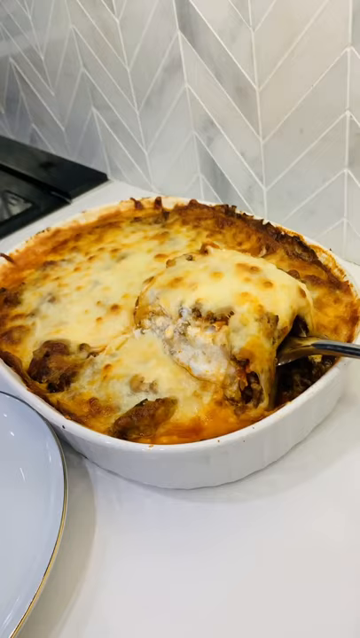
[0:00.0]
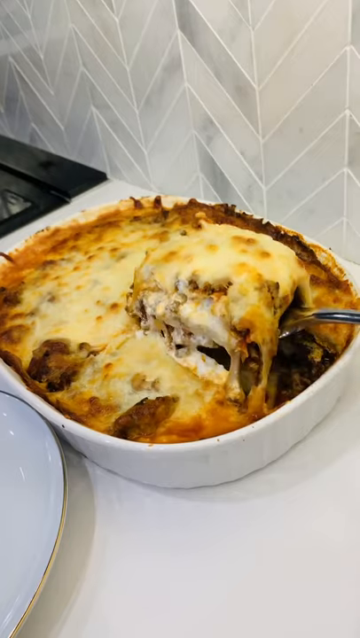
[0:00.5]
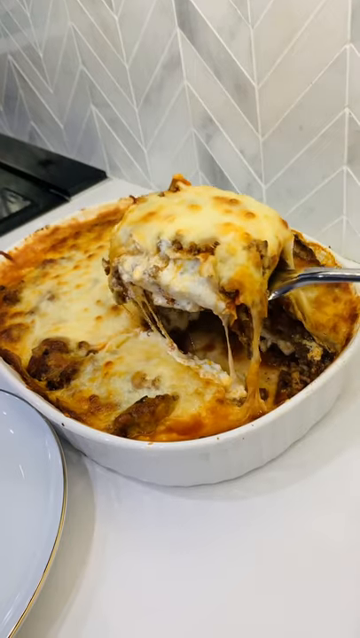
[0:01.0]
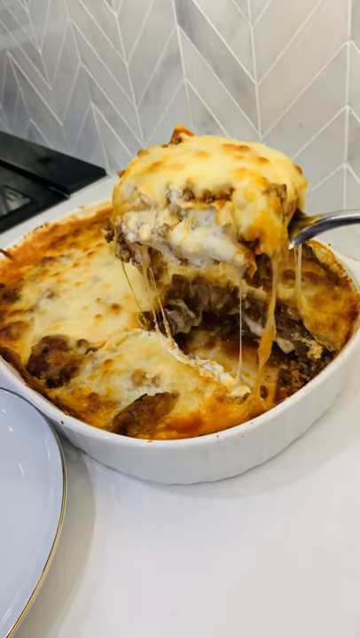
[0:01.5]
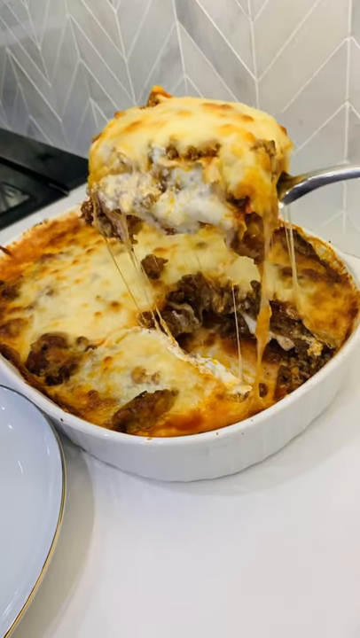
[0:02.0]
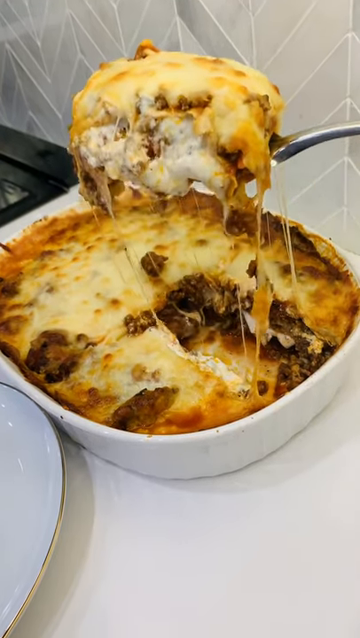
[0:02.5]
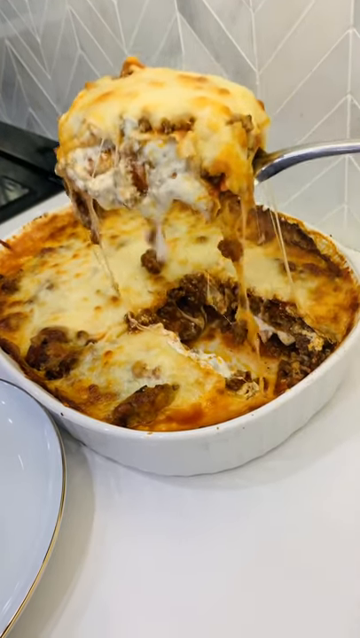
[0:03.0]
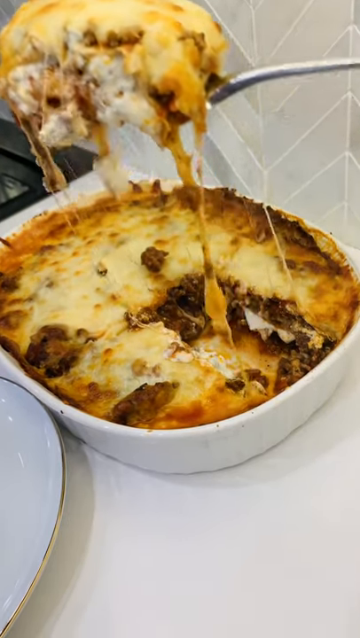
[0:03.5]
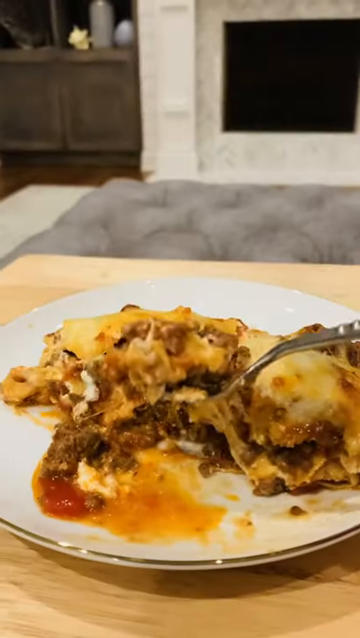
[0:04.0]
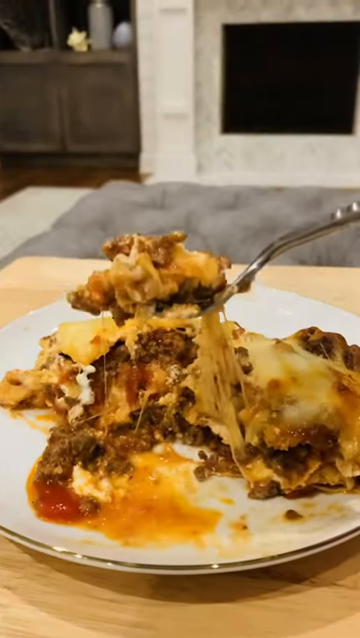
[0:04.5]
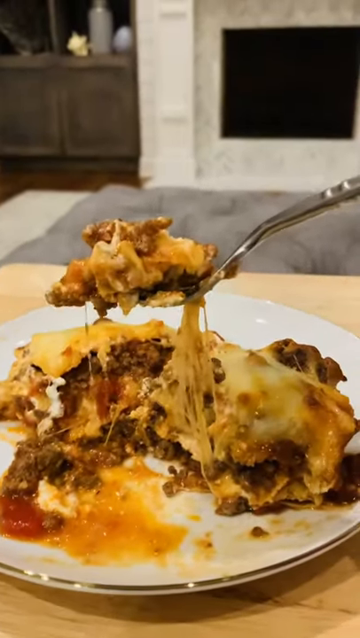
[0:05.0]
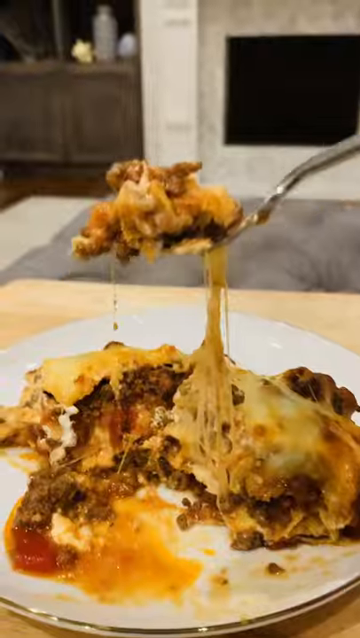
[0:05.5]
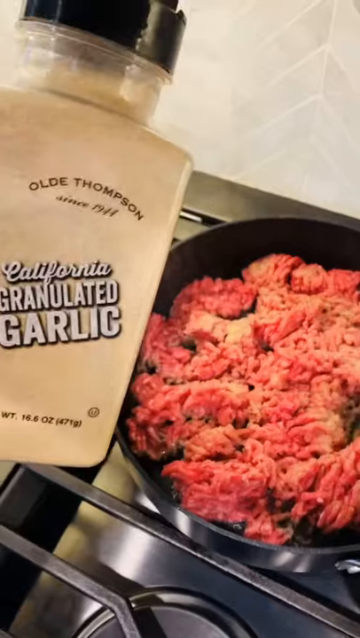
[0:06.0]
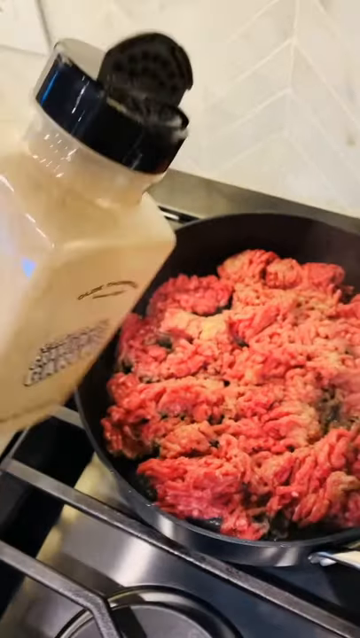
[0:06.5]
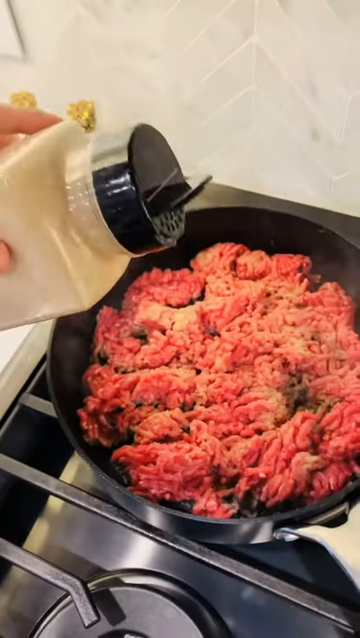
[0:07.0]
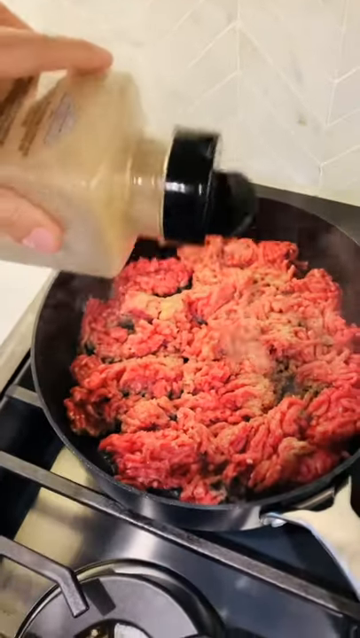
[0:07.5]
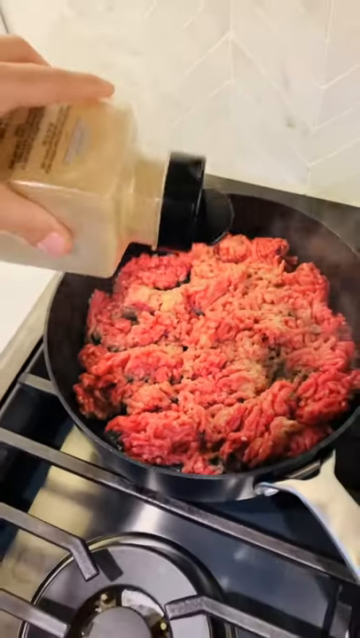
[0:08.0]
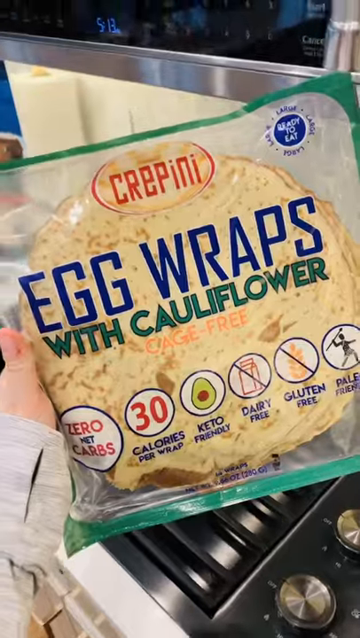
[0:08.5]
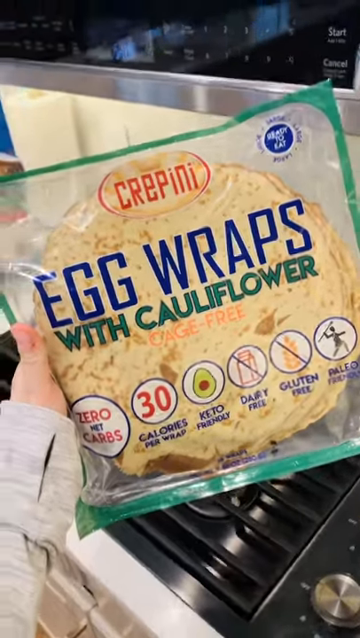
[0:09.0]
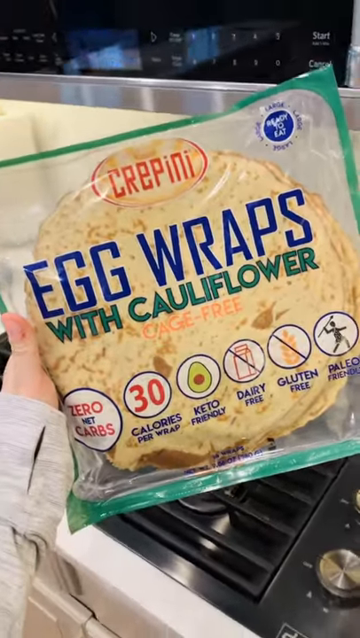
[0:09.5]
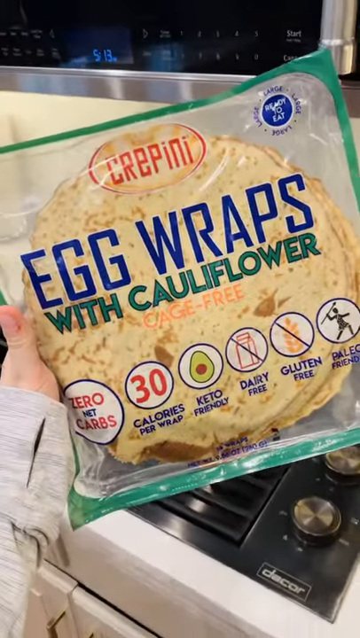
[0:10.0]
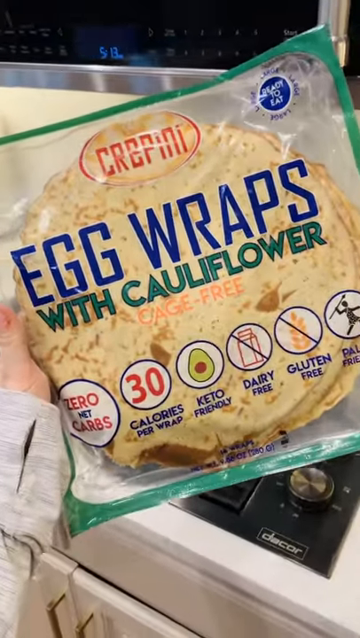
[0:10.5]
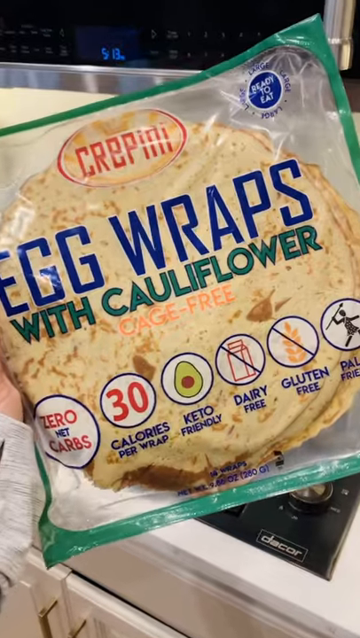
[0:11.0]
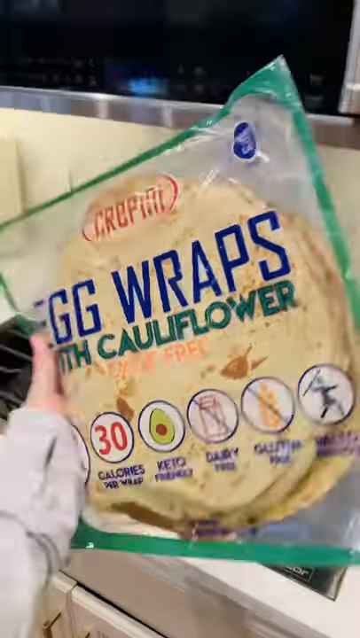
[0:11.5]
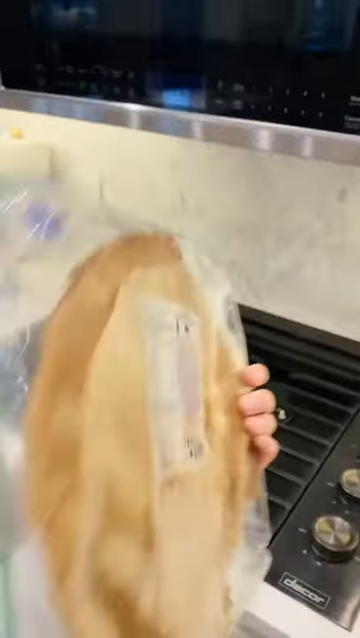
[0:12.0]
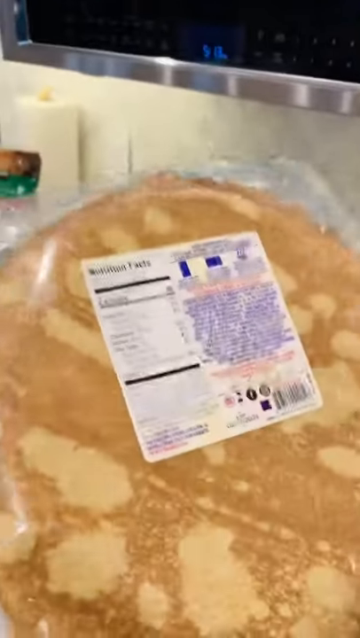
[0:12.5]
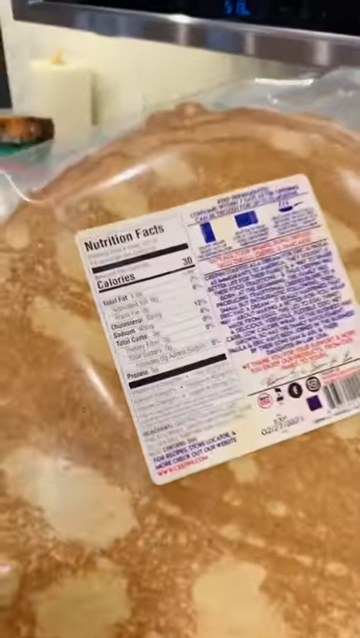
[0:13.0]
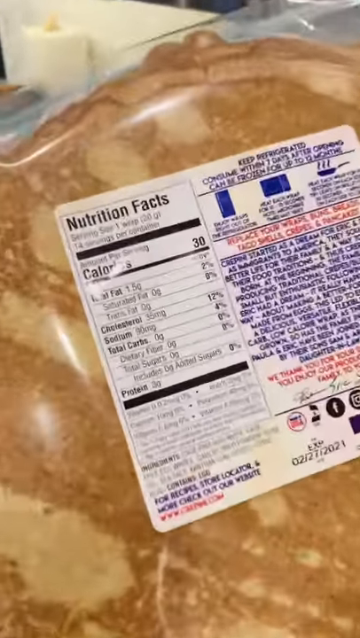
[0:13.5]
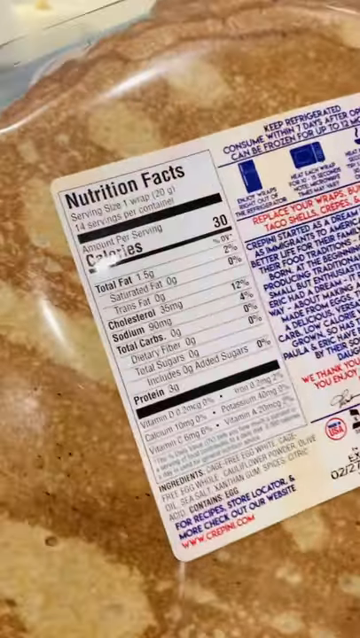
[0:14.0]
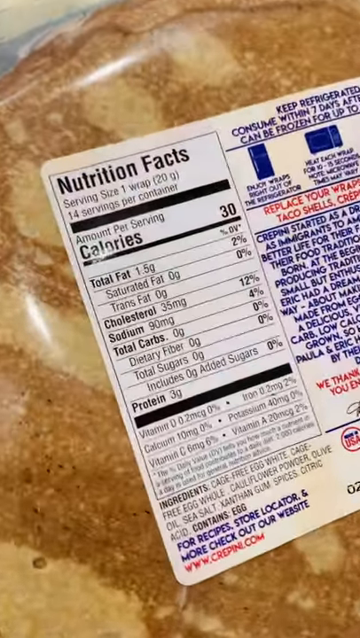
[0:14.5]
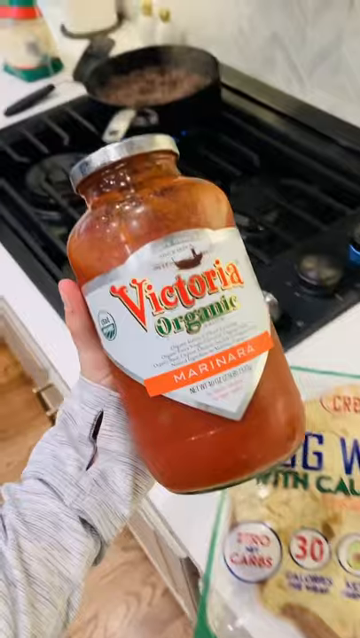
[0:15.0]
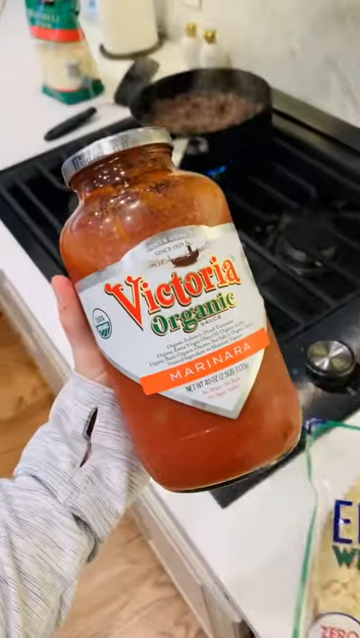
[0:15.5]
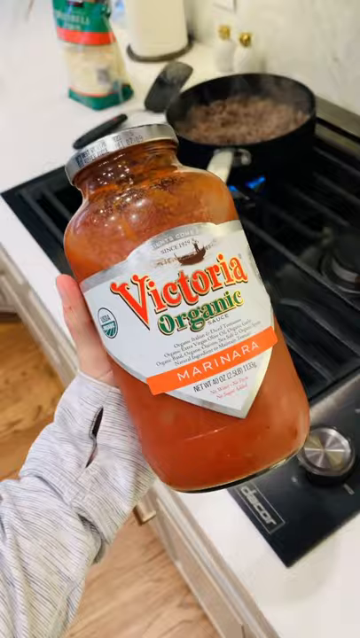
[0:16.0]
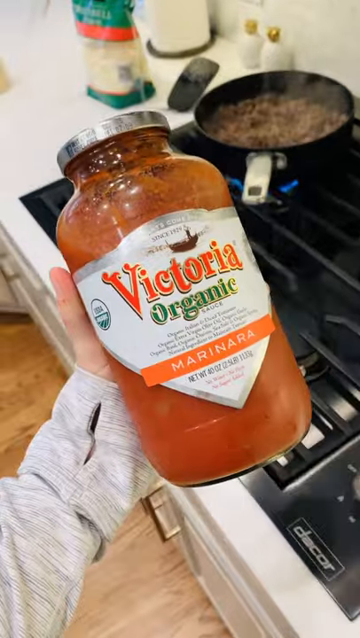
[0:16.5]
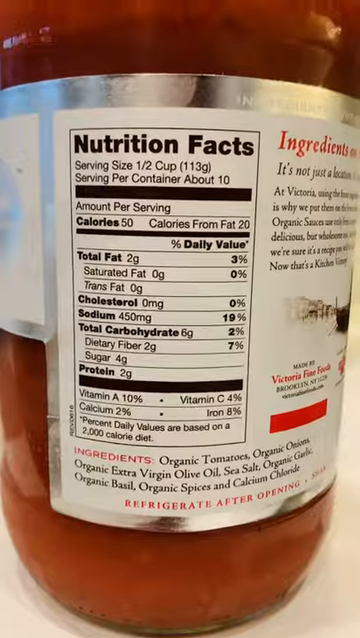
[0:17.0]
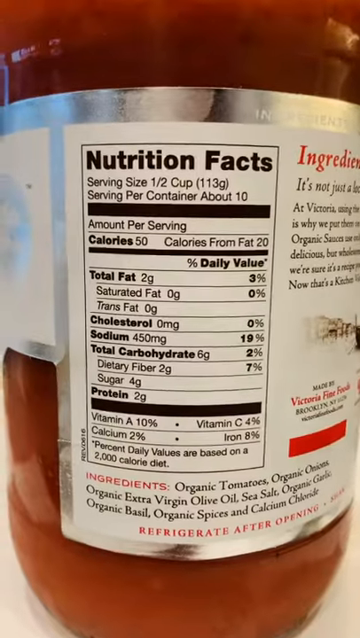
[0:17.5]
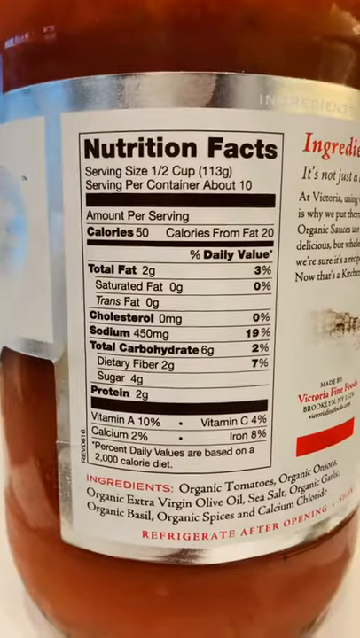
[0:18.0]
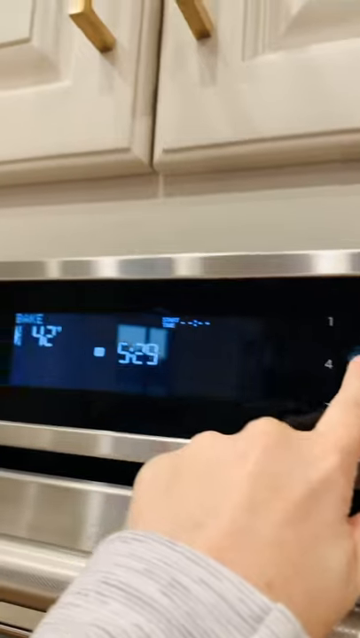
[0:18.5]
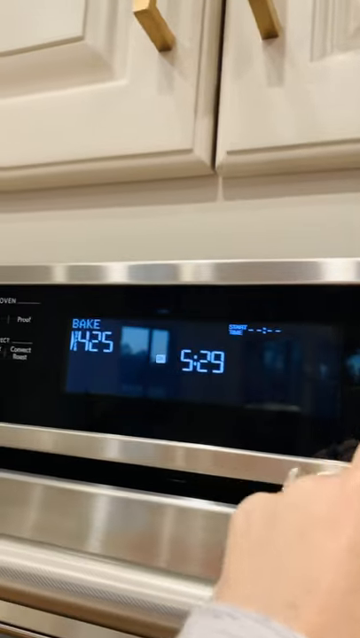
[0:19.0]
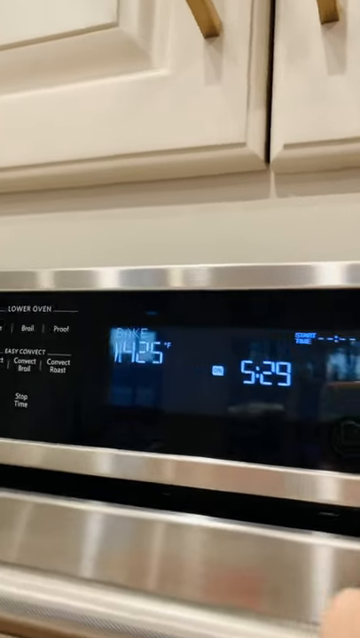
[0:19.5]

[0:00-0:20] A baked good is on top of a white countertop, with a gray hexagon design backsplash behind the countertop and a stove next to it. Someone uses a large silver spoon to dig into the baked dish. The video cuts to a slice of the baked good, which looks like lasagna, on a small saucer-sized plate, and someone eats the lasagna using a fork. The video then apparently begins to show how the lasagna was prepared: on the stove there is a black cast iron skillet, and someone shows a large bottle of granulated garlic, which they pour into the large black pan of ground beef.